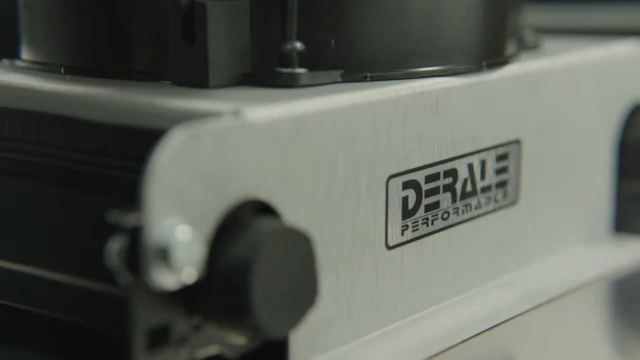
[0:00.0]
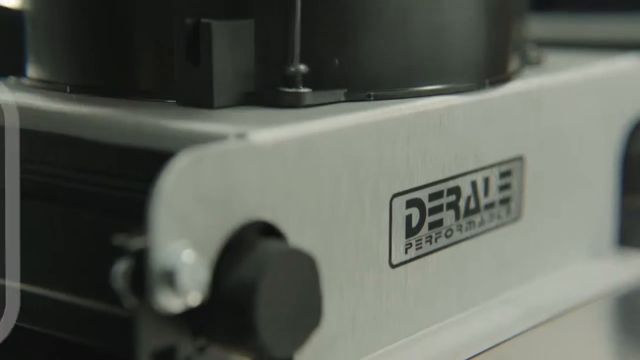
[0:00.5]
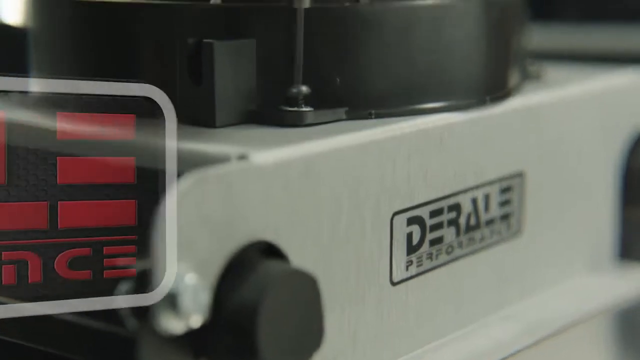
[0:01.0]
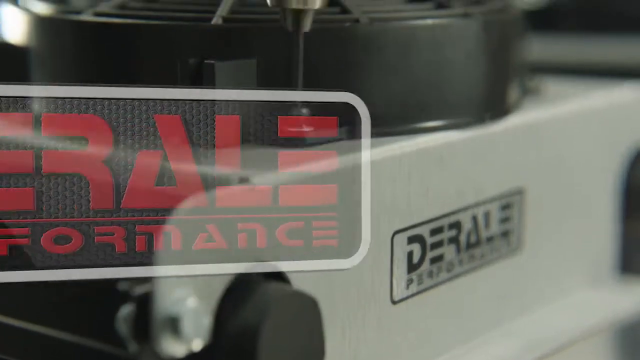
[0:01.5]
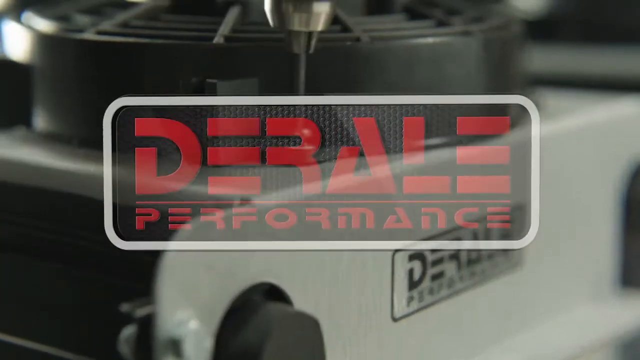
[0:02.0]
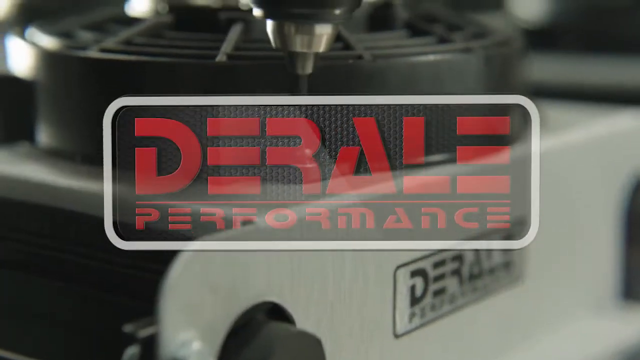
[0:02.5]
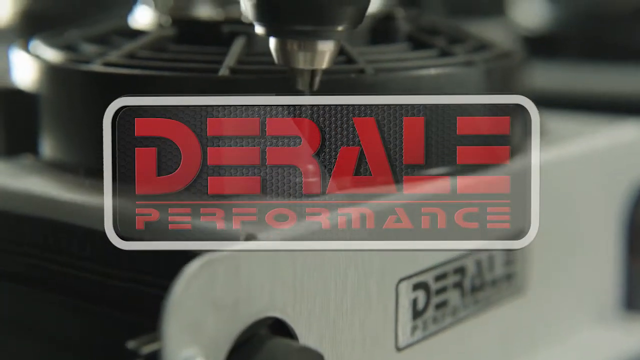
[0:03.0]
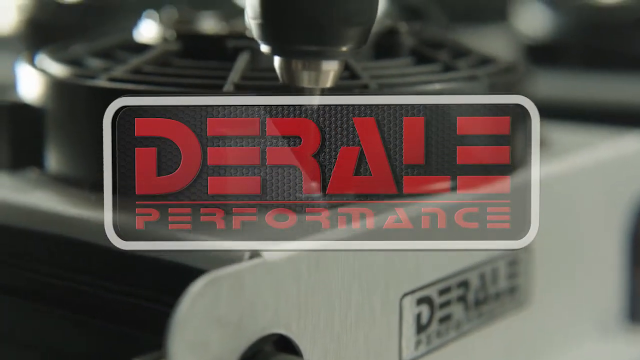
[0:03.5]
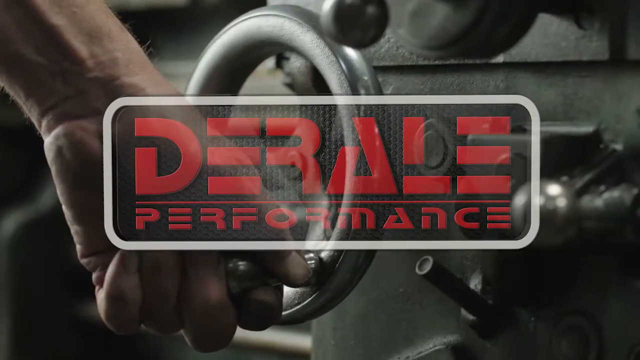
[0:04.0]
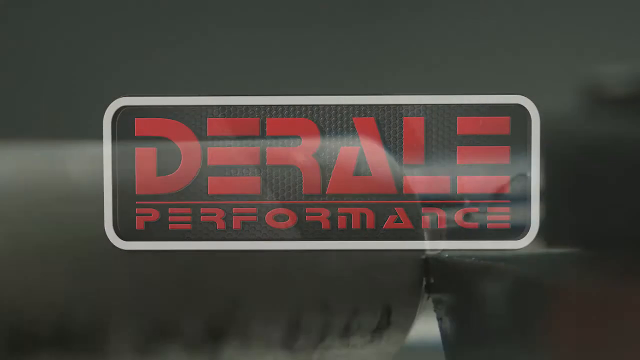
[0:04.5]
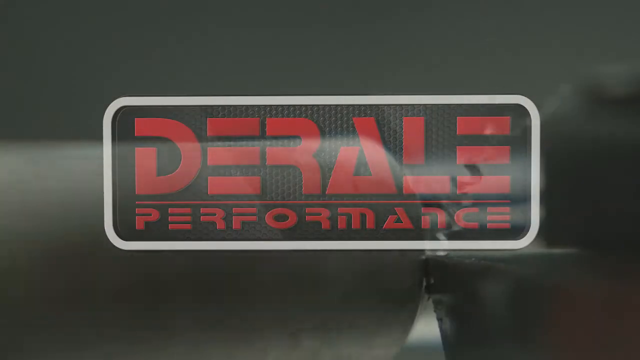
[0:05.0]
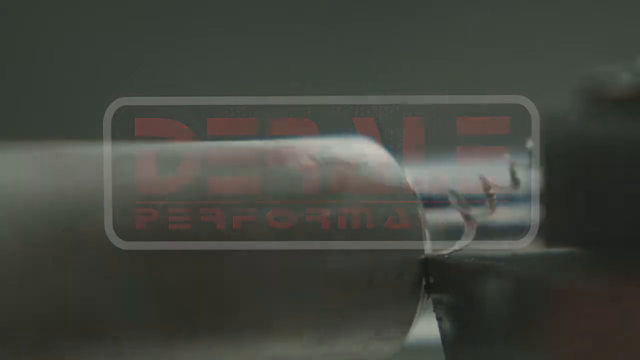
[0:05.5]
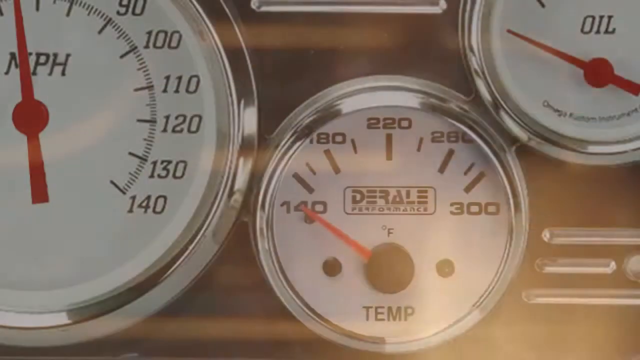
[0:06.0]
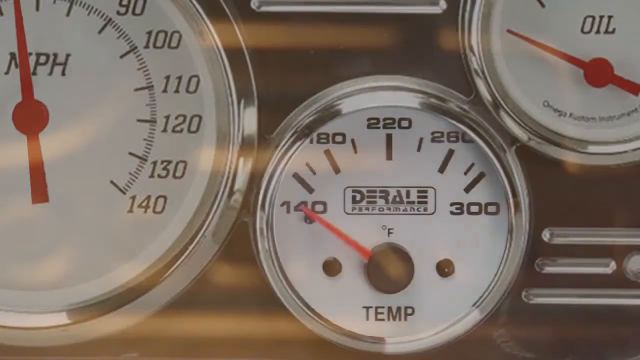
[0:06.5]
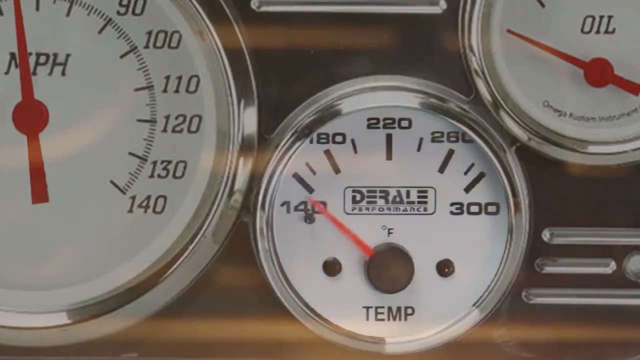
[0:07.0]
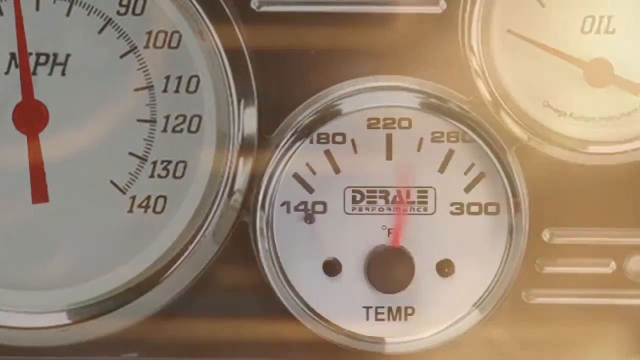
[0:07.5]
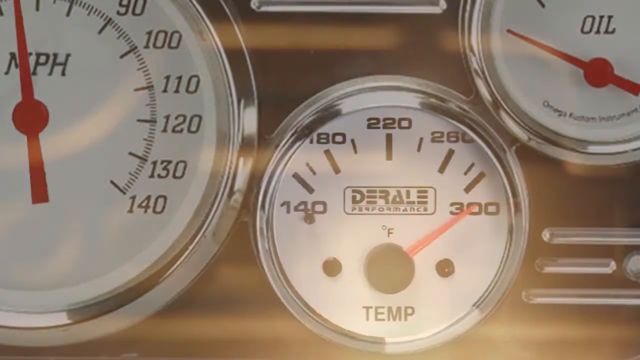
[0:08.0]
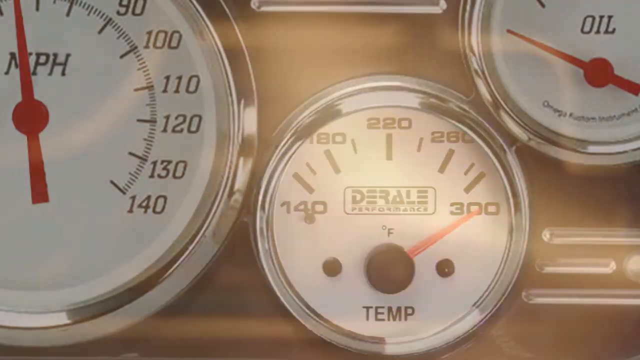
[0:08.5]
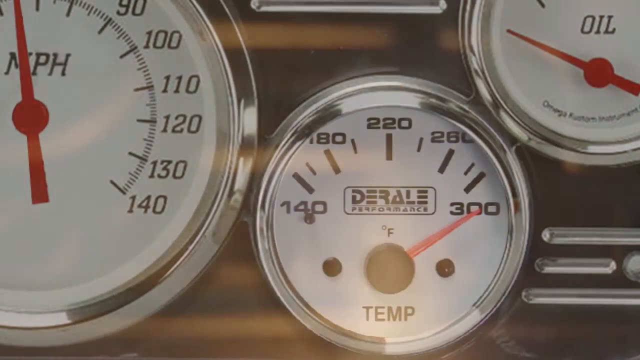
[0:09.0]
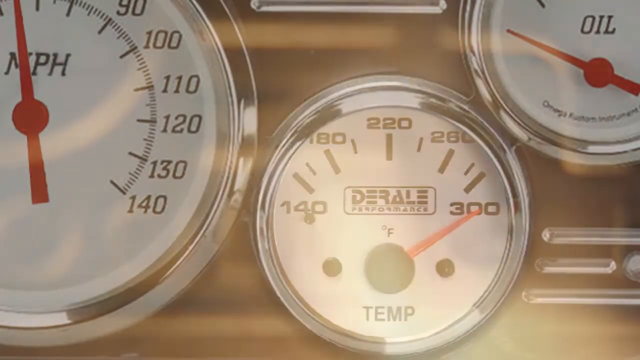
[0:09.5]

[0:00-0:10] A machine with a D-Rail Performance tag on its side appears to be rotating. A hand pulls on a valve, showing how the machine turns something. Levels for temperature, oil and mass per hour appear, and the temperature rises a lot. The machine has many rotating parts and works in many ways, though what it actually does is not clear; only its operation is shown. At the end, a fiery graphic shows the temperature going up.